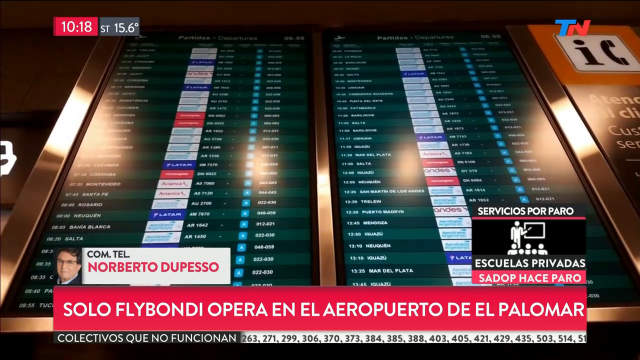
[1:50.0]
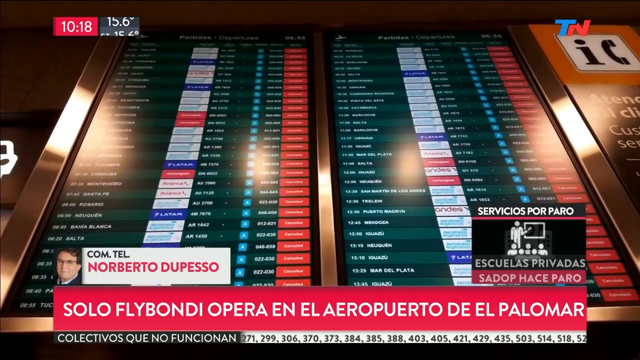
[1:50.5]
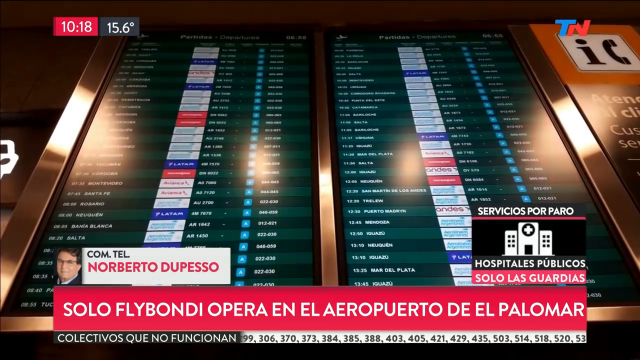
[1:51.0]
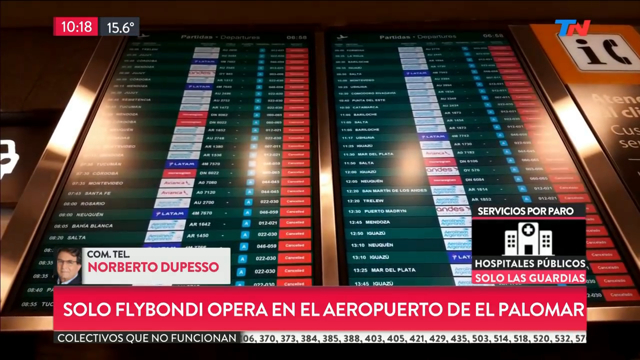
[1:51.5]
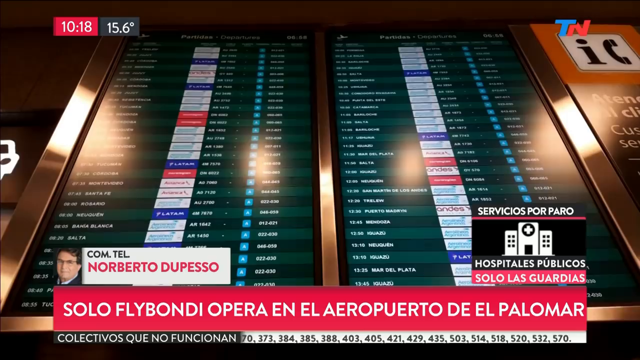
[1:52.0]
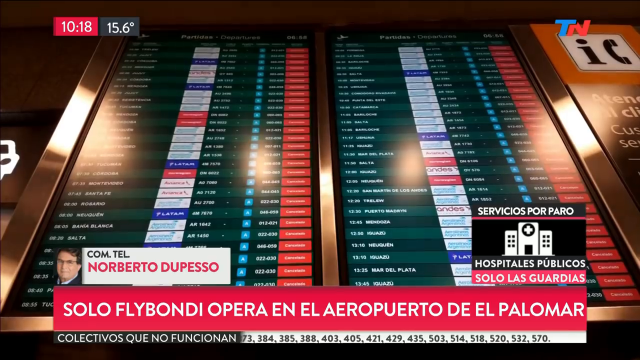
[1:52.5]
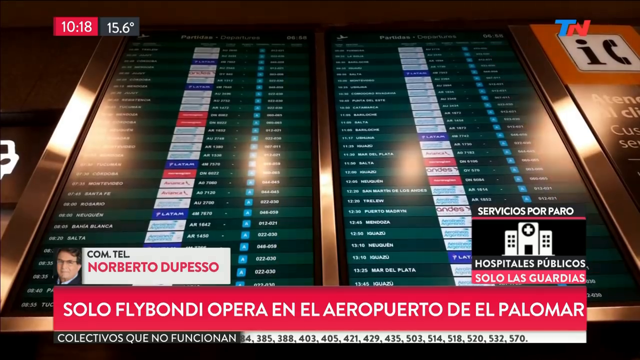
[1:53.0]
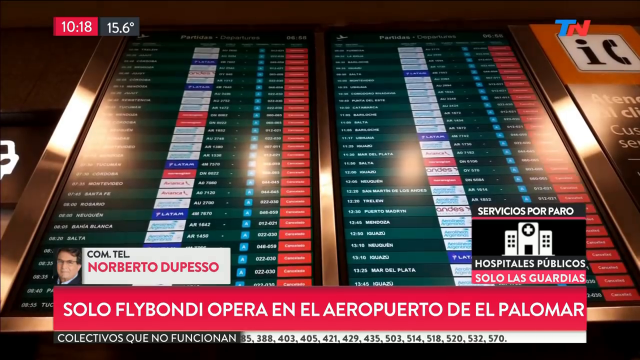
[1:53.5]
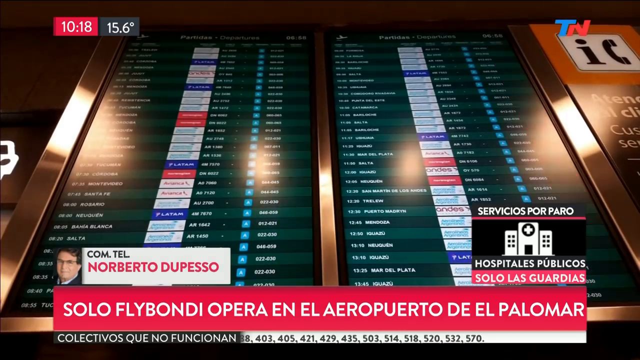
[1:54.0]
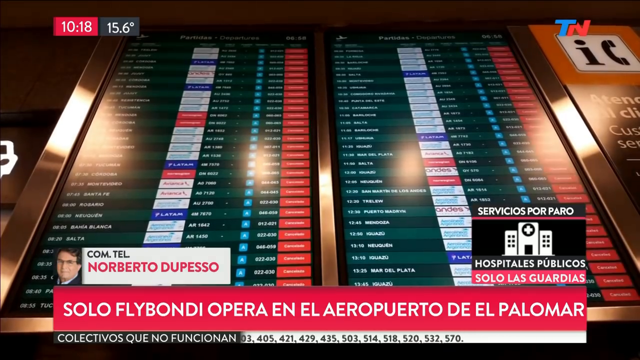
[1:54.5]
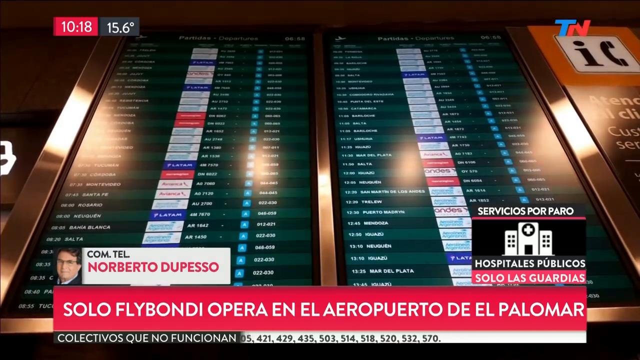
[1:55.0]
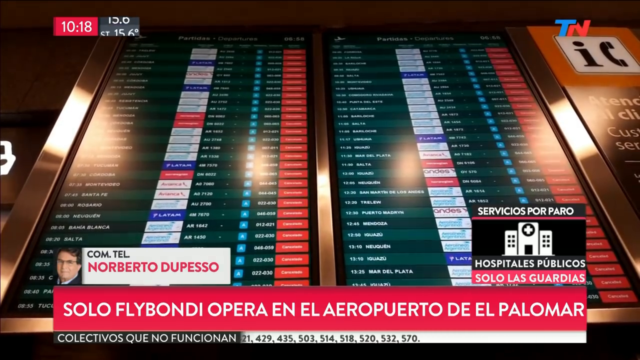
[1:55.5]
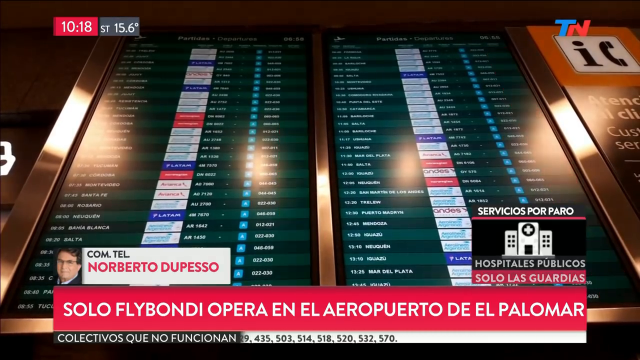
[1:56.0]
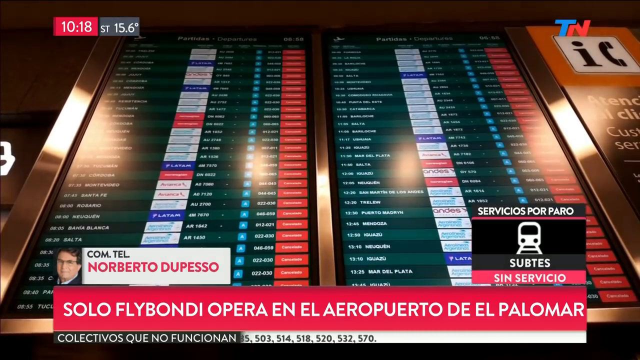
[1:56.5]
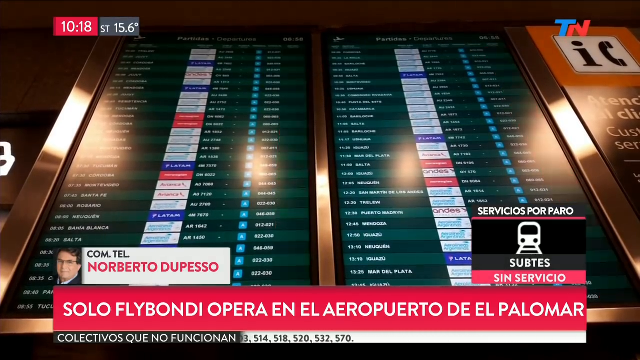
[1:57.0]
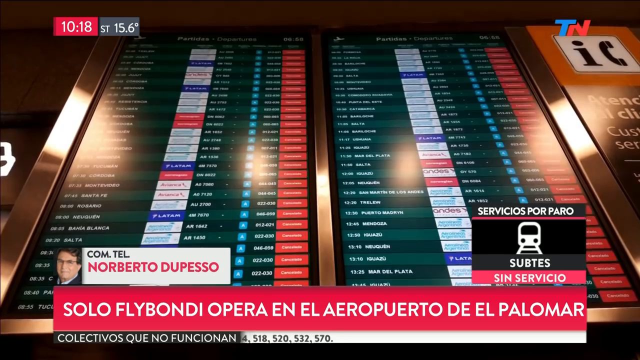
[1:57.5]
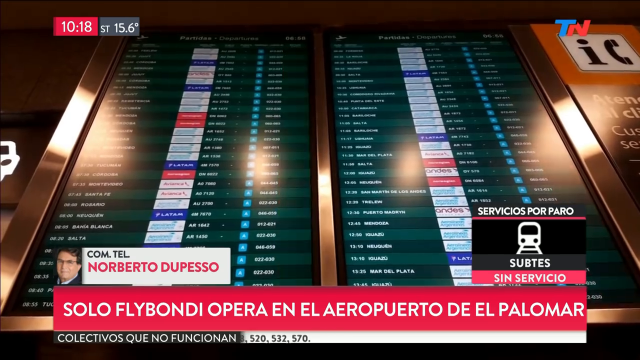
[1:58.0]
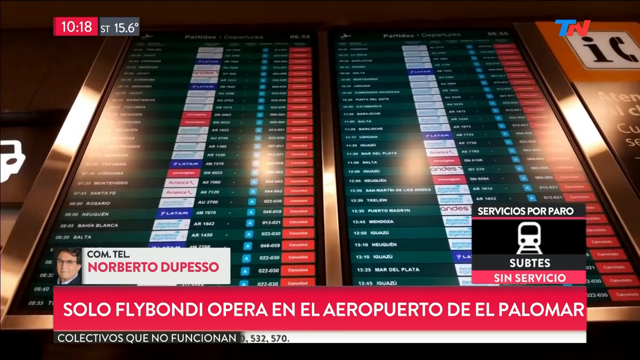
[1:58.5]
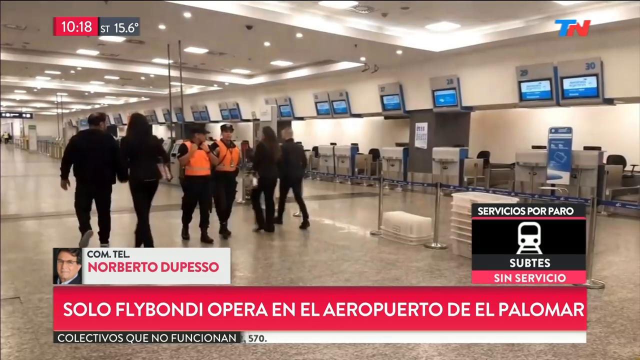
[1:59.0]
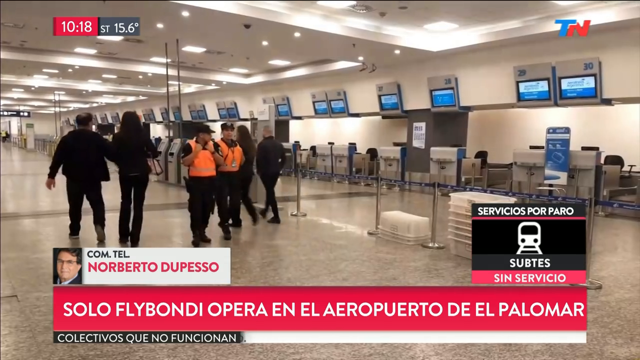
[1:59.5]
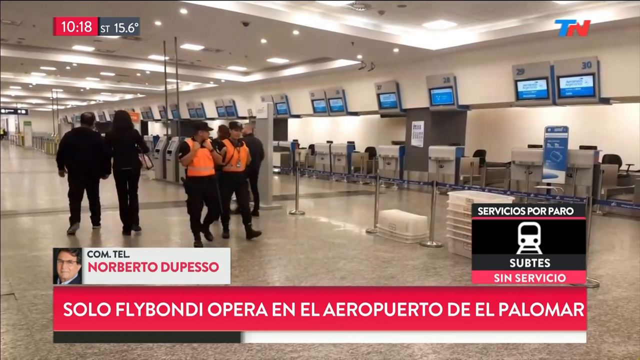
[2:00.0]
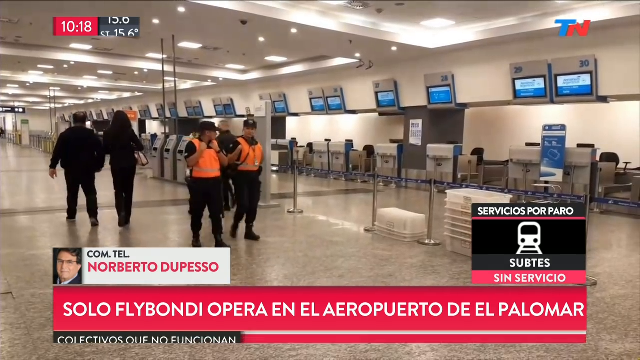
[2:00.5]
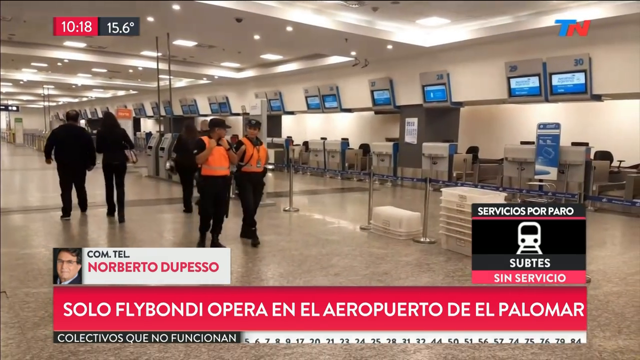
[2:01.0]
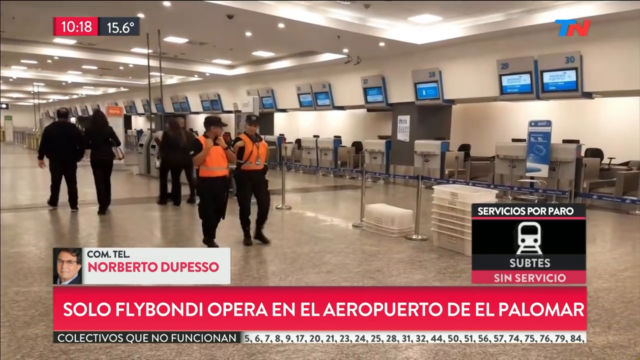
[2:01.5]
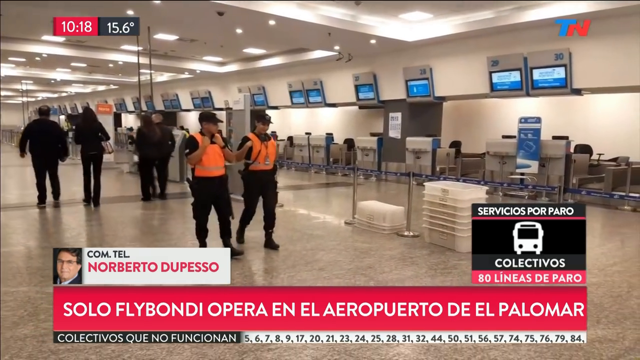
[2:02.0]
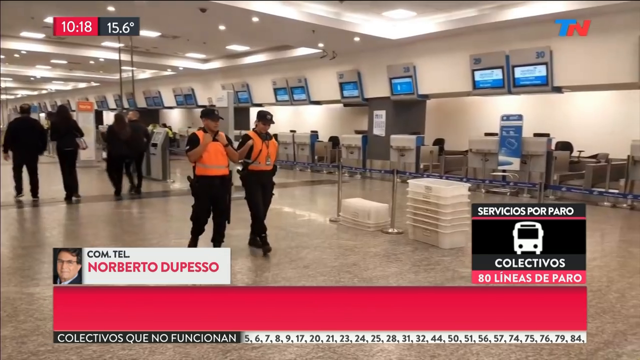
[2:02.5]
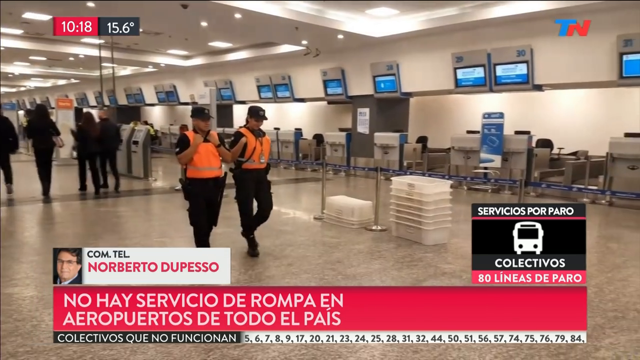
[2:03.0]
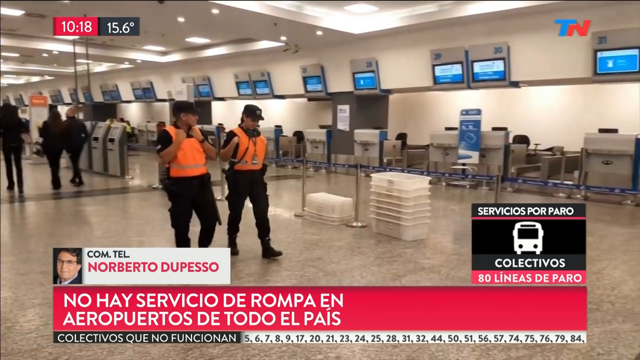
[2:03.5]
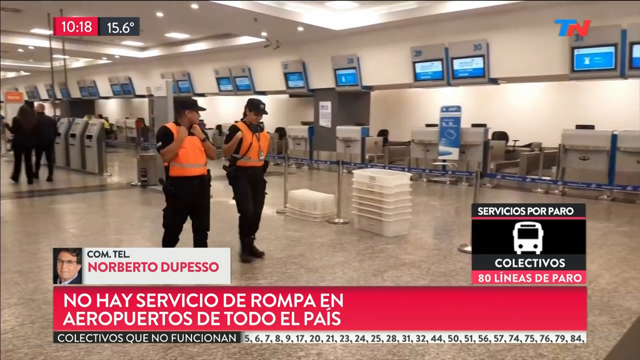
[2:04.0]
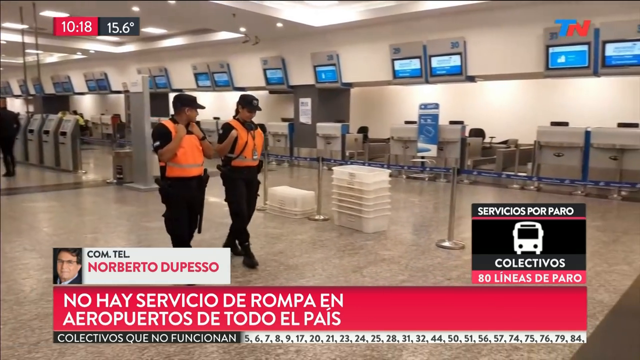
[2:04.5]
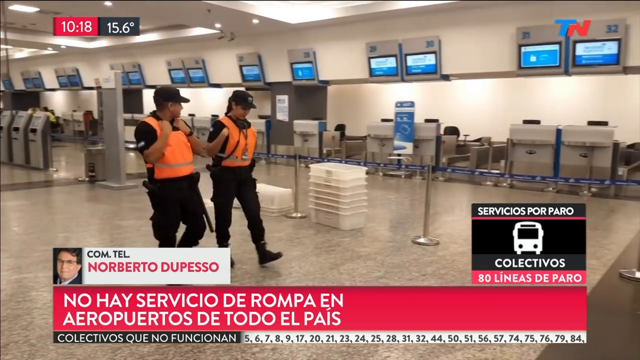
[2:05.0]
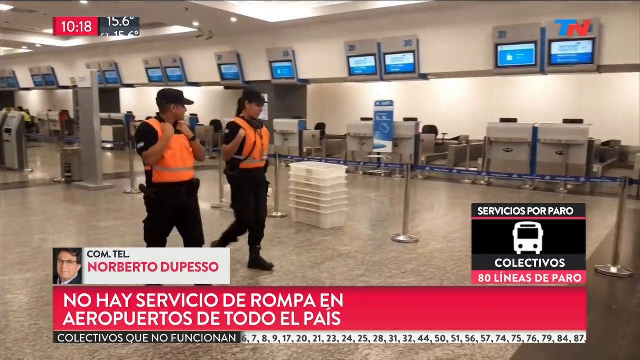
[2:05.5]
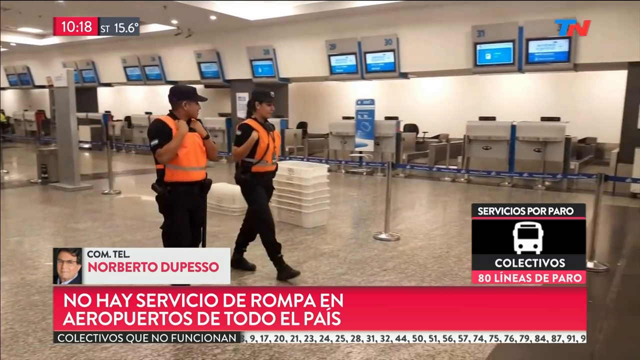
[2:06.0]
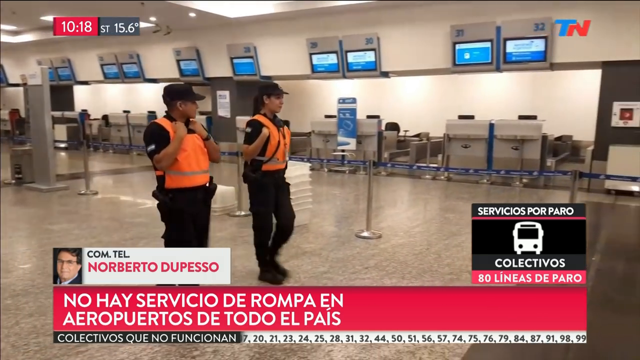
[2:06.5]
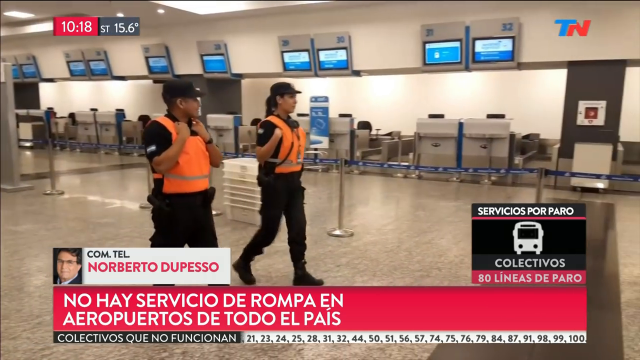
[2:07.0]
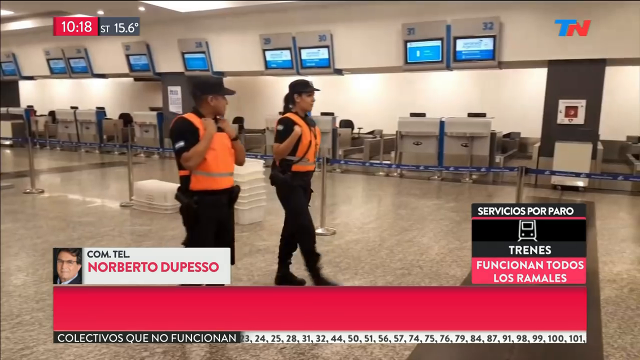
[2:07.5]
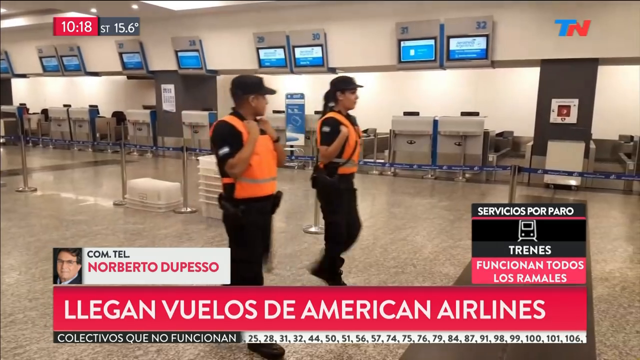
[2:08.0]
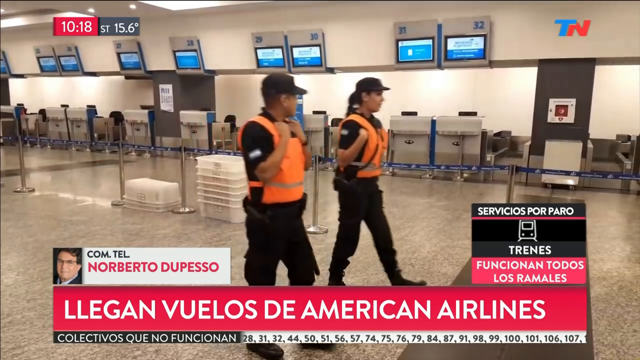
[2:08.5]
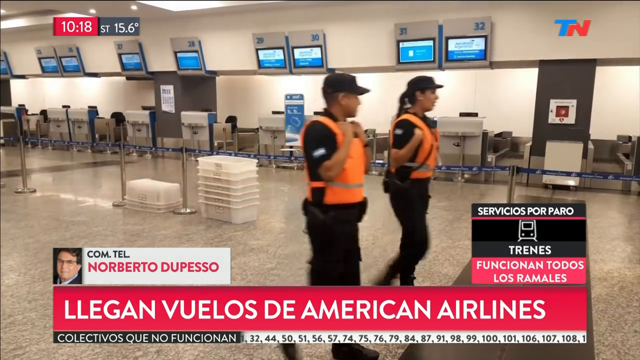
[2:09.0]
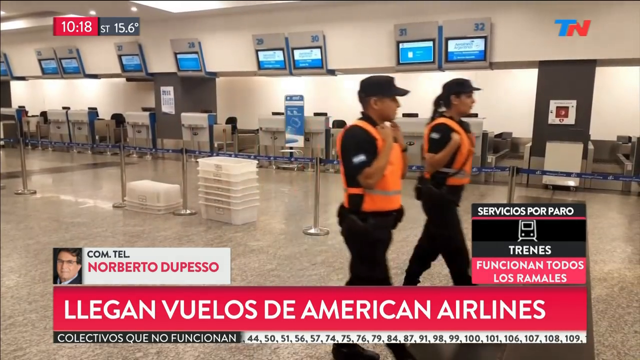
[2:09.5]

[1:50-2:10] The camera focuses closely on the big displays. In the bottom right, different means of transport keep appearing on the screen. In the bottom left, there is a portrait of a person called Nobato Tubeso, possibly the one giving passengers directions. The view then takes in the entire station: in the background, servicemen wearing green reflectors sit on chairs, and two guards, a woman and a man, walk steadily as they talk. The woman has her arms folded inside her reflector, and the man holds his shirt with both hands.